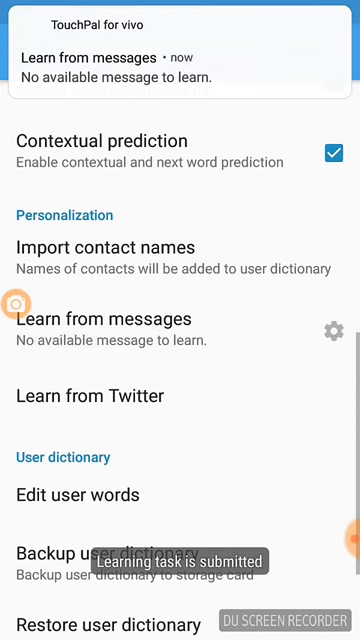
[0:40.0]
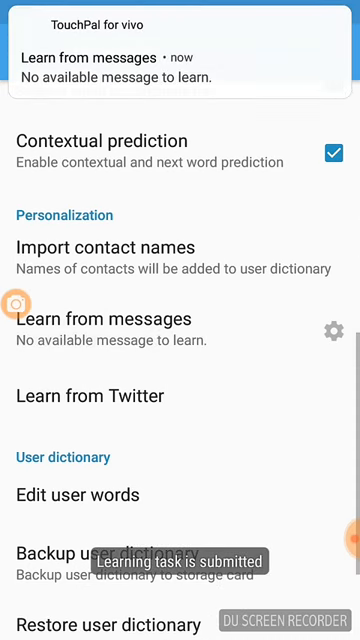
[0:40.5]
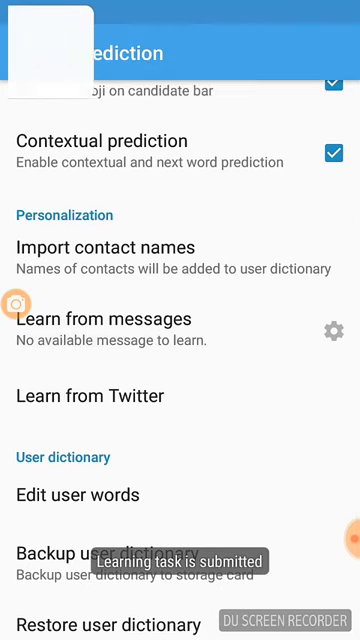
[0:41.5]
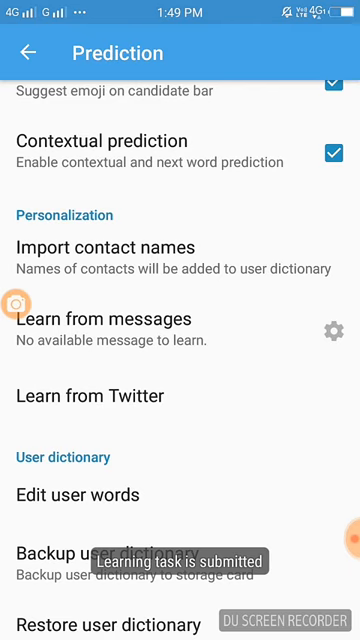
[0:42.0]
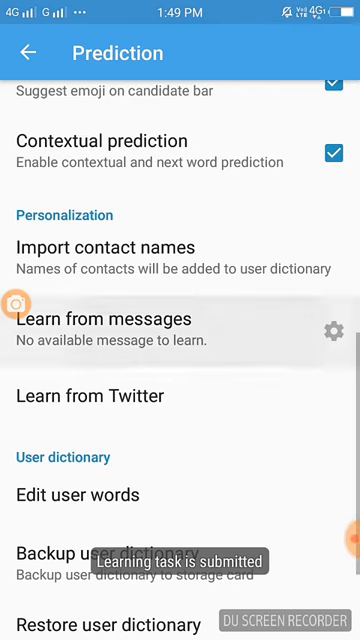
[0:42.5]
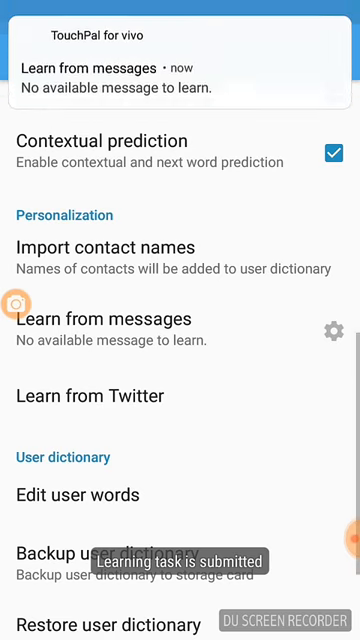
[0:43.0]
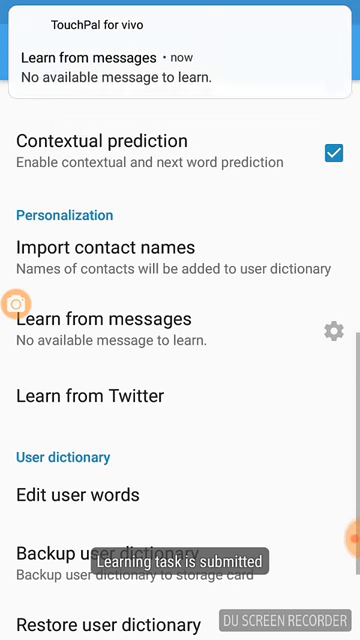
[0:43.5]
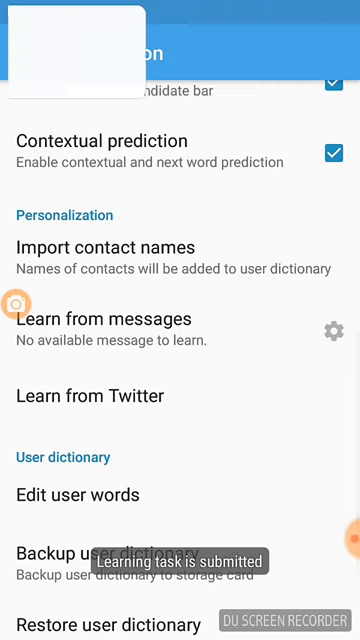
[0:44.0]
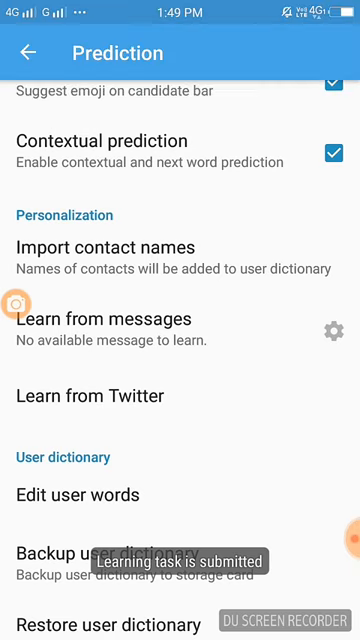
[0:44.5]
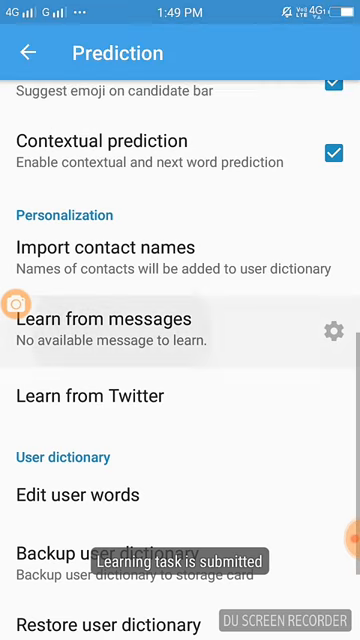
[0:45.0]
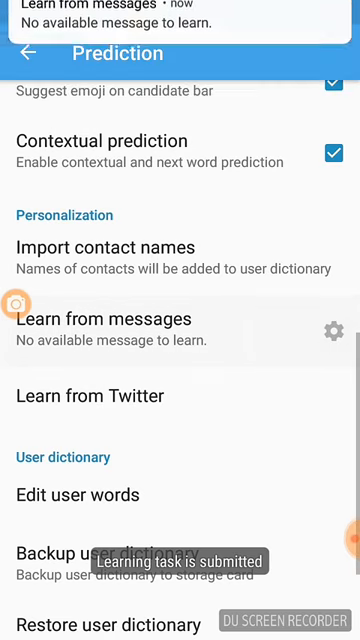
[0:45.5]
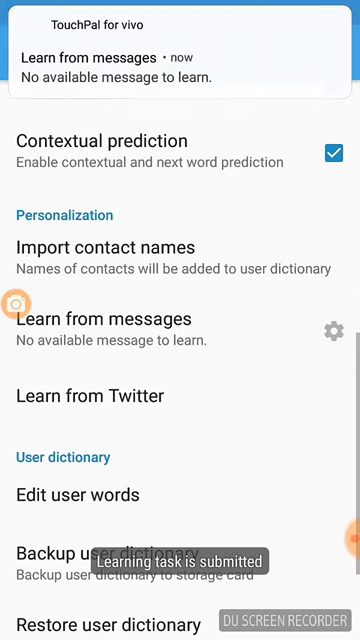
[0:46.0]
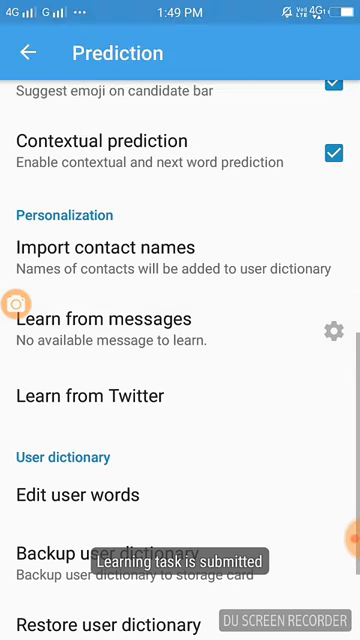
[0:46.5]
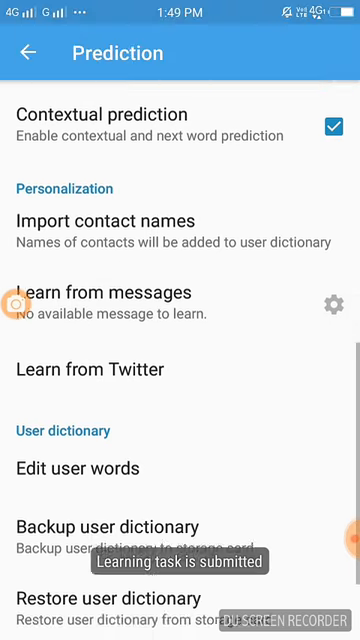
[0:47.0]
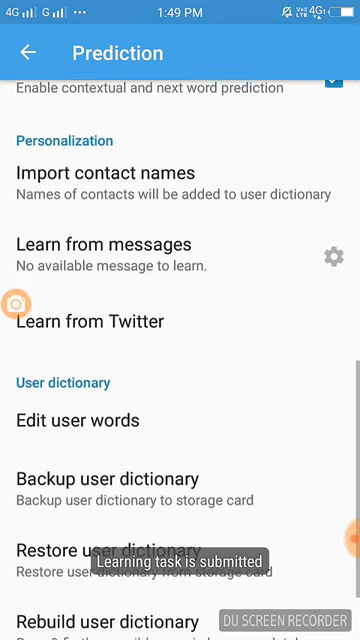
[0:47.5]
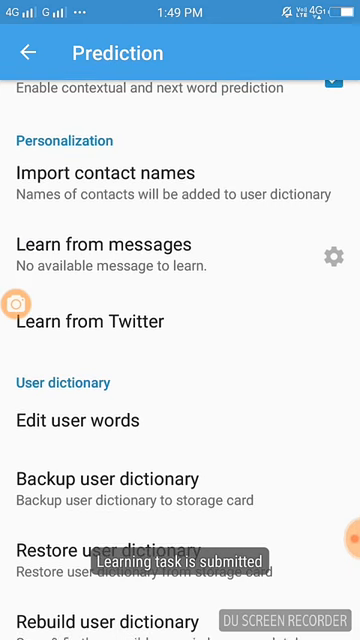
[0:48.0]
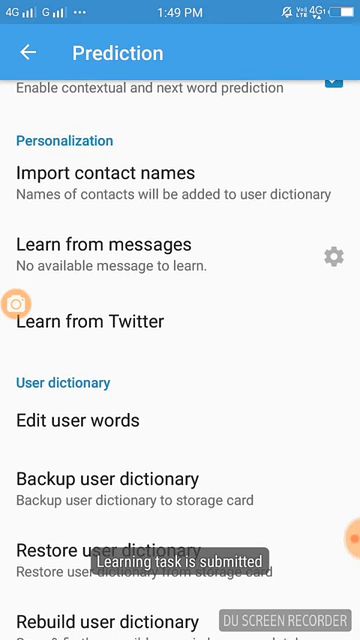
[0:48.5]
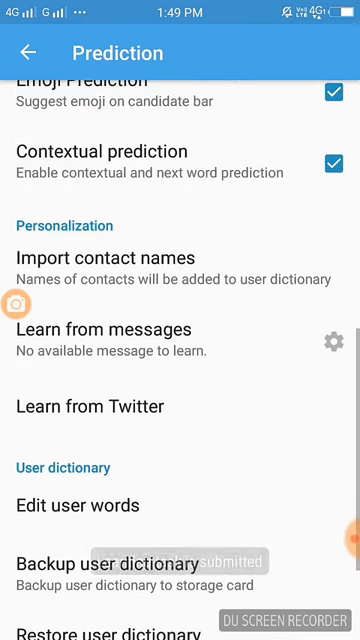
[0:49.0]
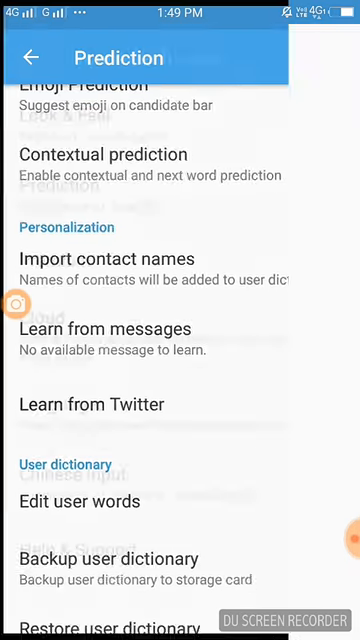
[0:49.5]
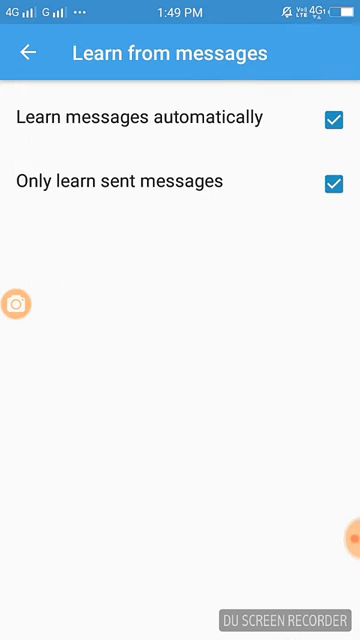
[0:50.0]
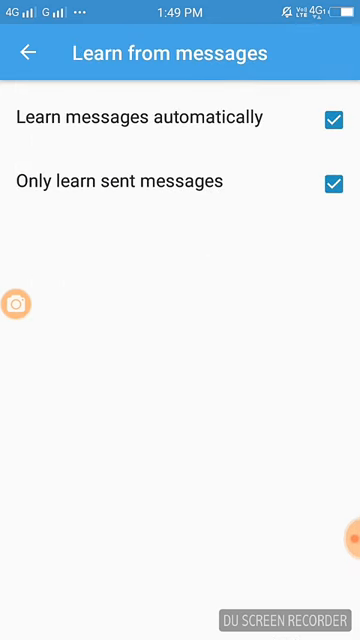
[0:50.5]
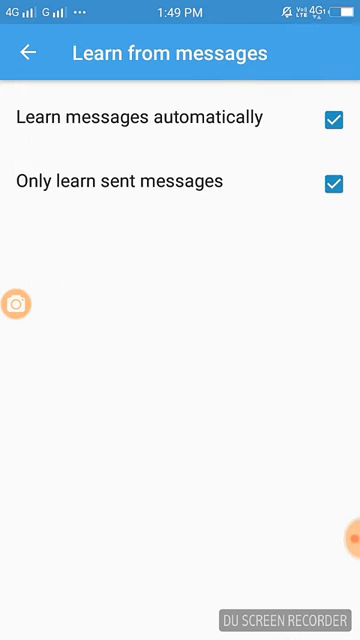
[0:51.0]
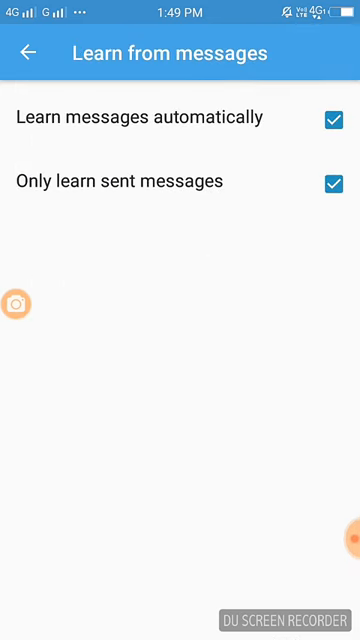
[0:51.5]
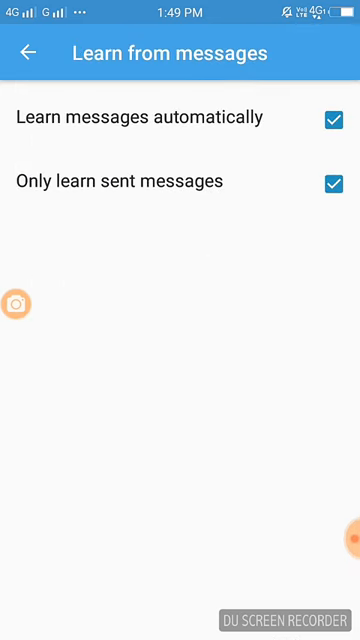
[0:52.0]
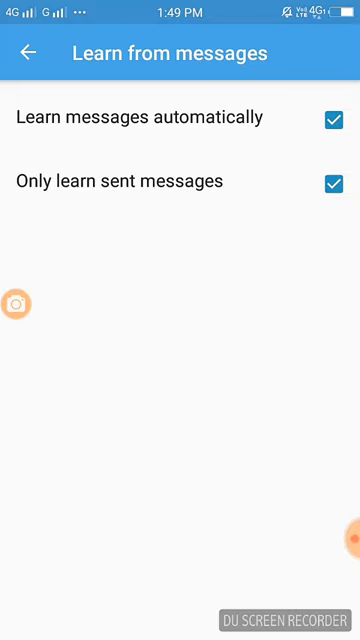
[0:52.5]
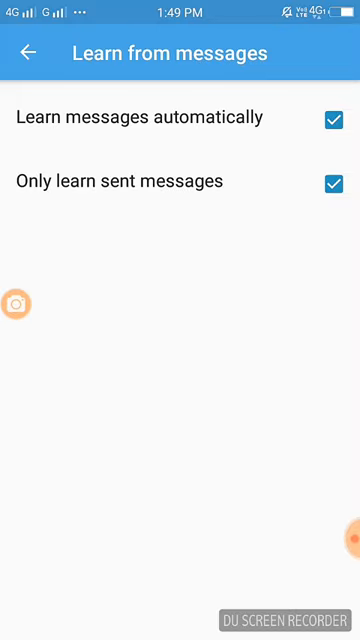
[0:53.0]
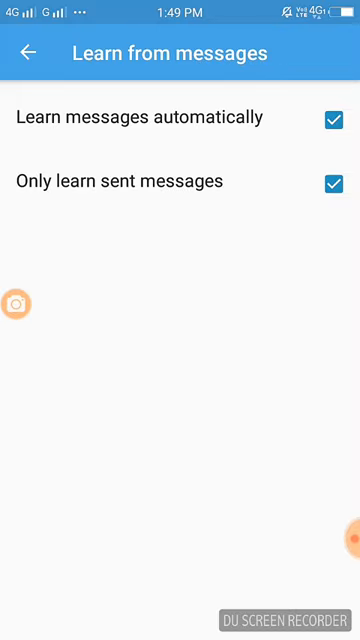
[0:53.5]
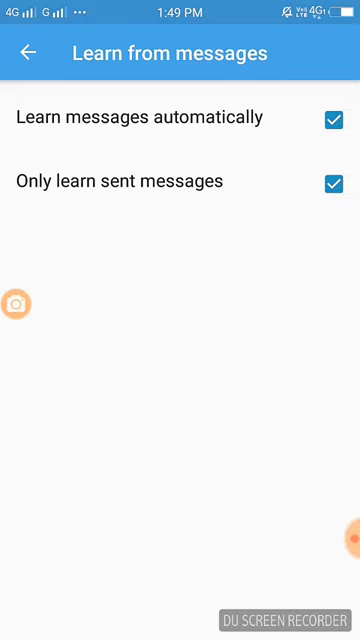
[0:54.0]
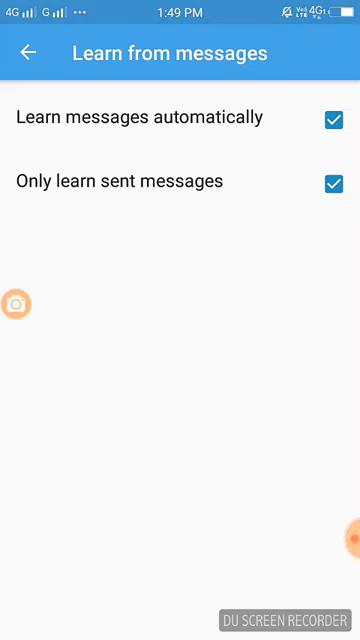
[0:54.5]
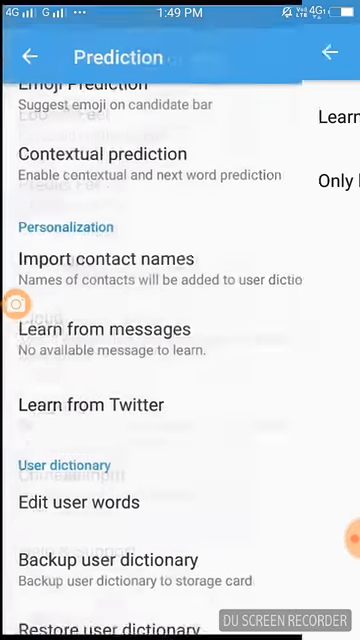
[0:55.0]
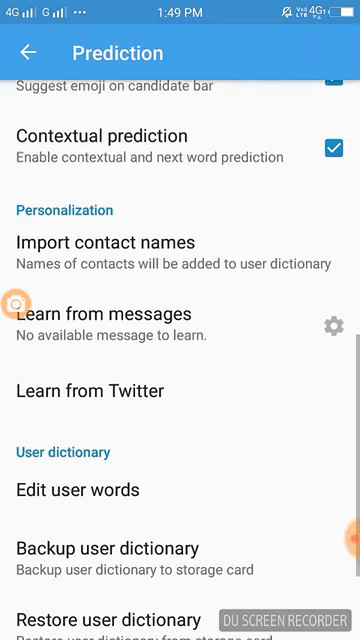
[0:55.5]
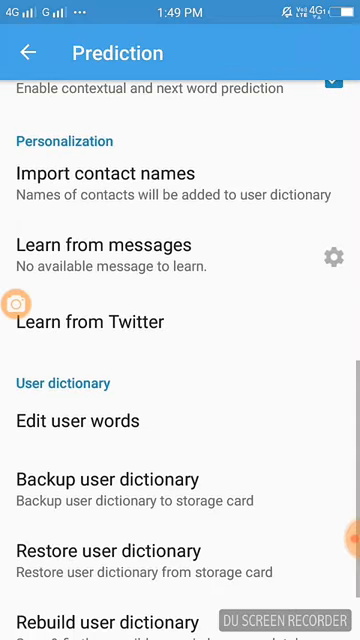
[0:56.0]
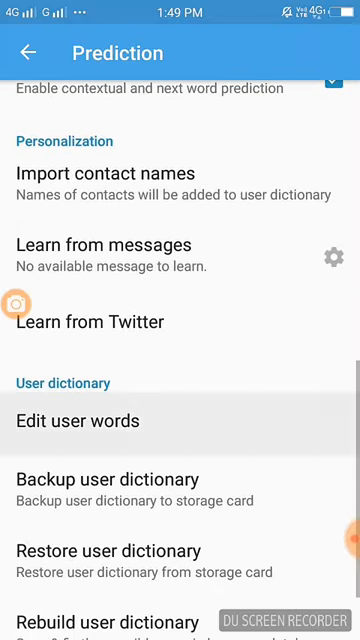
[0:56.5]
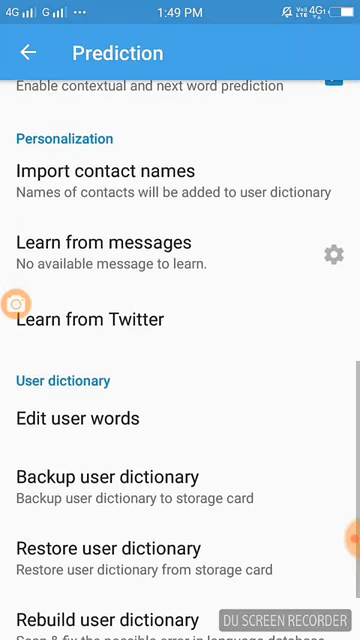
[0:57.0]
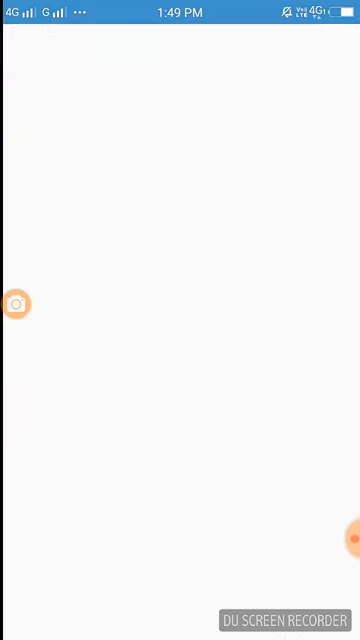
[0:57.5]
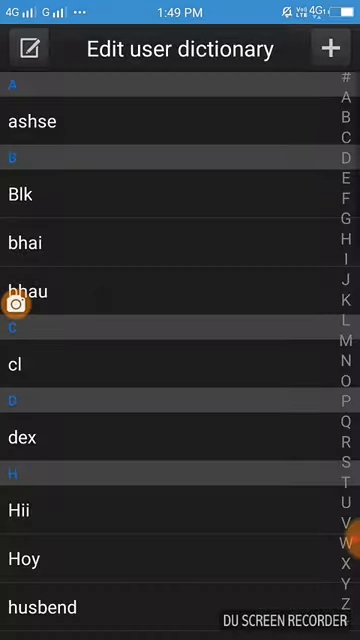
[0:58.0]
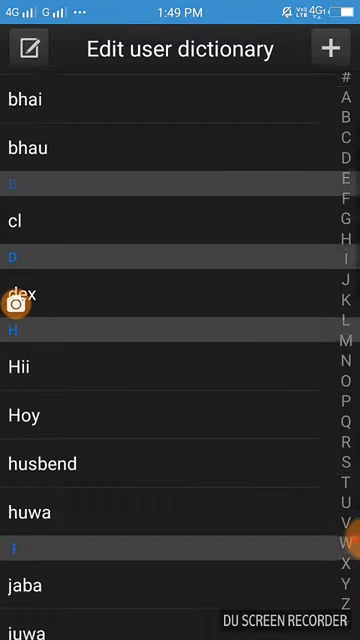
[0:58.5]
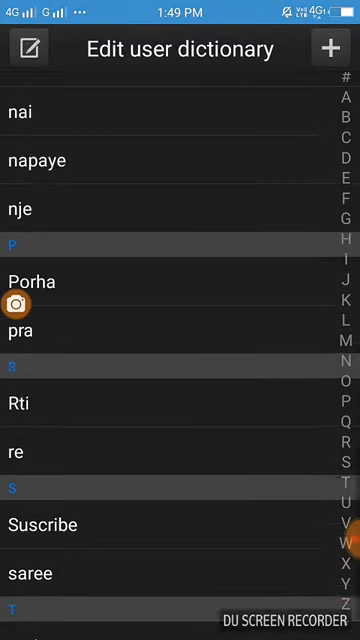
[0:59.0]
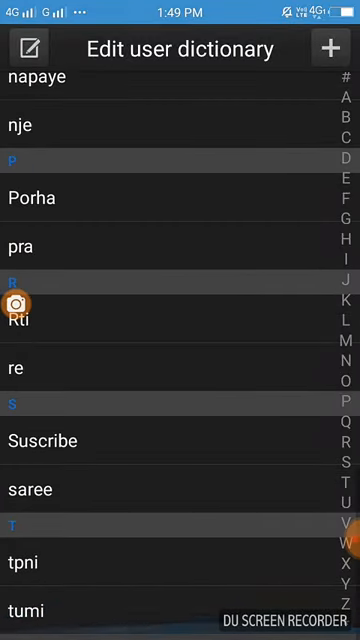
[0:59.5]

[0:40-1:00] A pop-up appears and goes away while the prediction tab is still open. Another pop-up appears at the top, mentioning TouchPal for Vivo and "learn from messages" and saying "no available messages". The pop-up appears again with the same message and disappears very quickly. The person scrolls down and clicks on learn from messages, which shows two checkboxes, "learn messages automatically" and "only learn sent messages", both checked. He swipes back to the predictions tab, scrolls down and clicks edit user words, which opens a dictionary window with a gray background. The edit user screen is on N, with the alphabet from A to Z on the right side, and shows words such as N-A, N-A-I, N-A-P-A-Y-E and N-I-E.